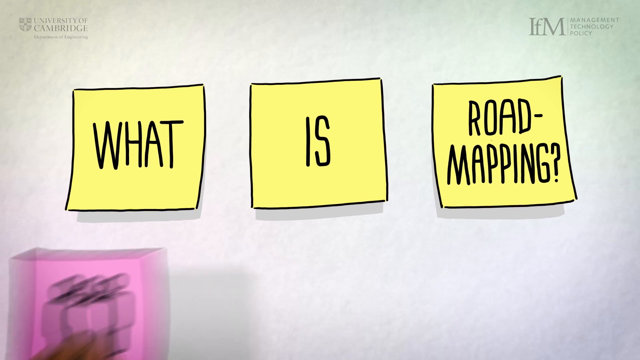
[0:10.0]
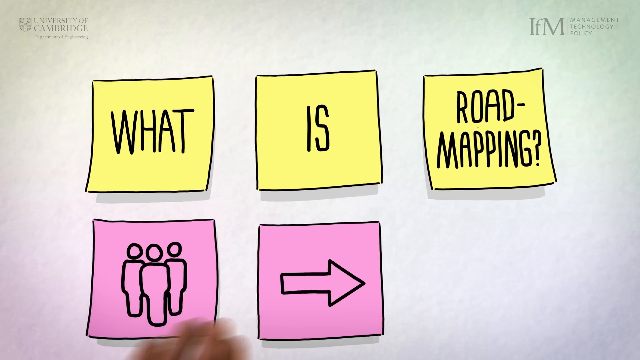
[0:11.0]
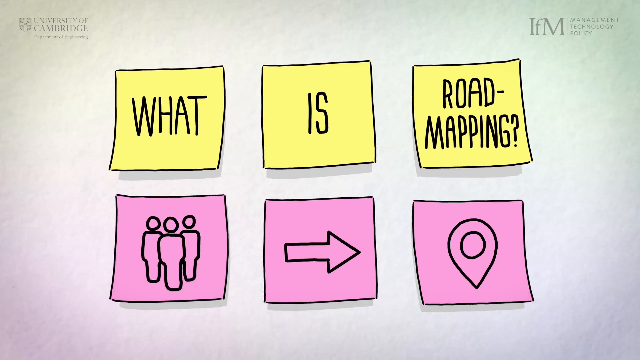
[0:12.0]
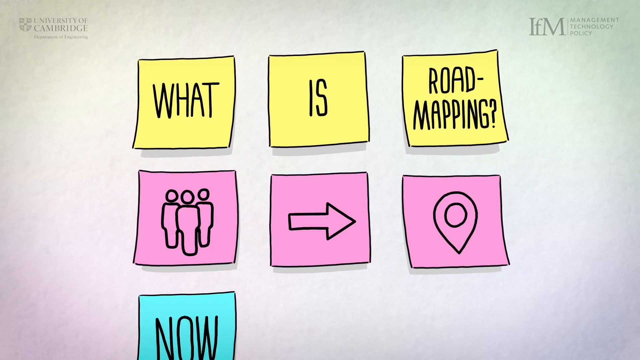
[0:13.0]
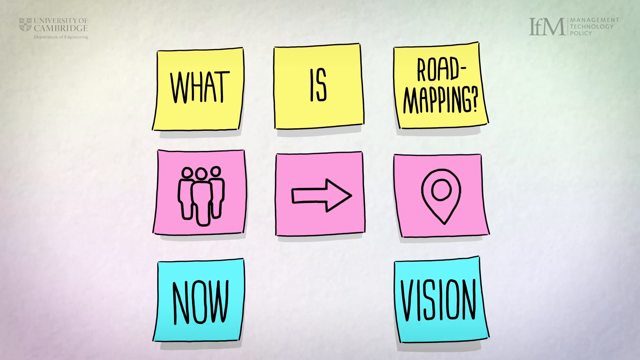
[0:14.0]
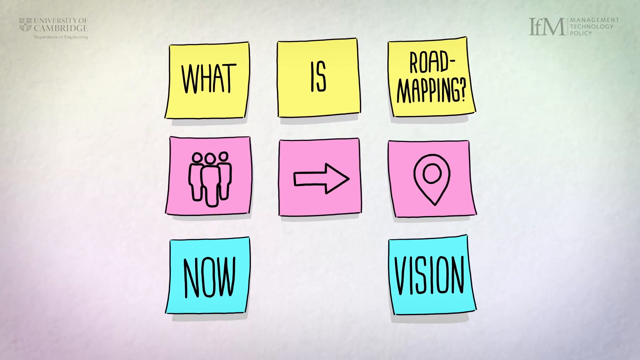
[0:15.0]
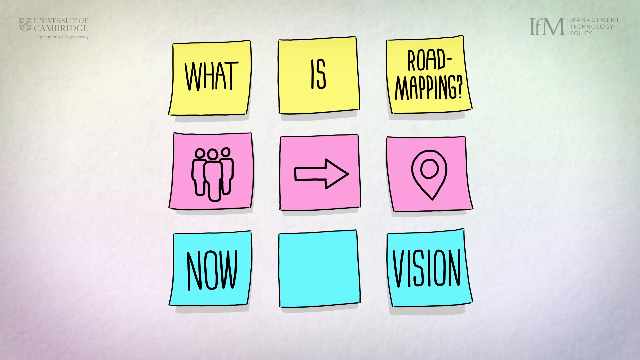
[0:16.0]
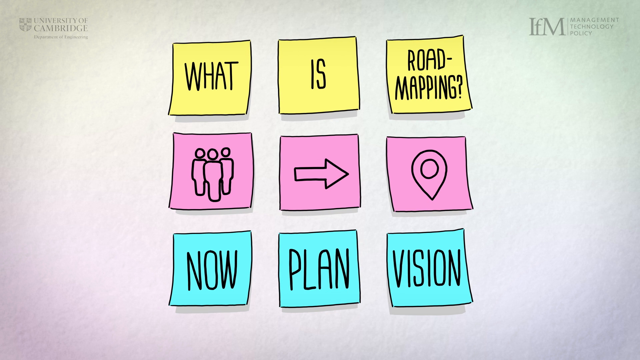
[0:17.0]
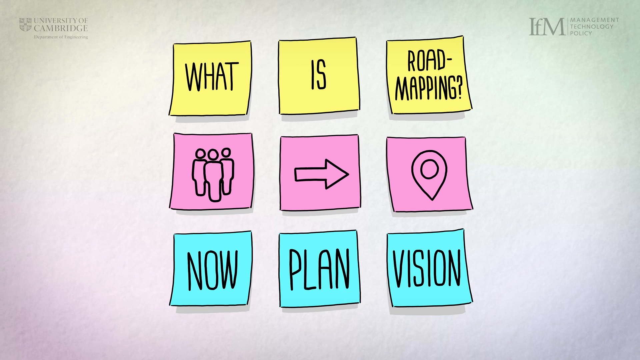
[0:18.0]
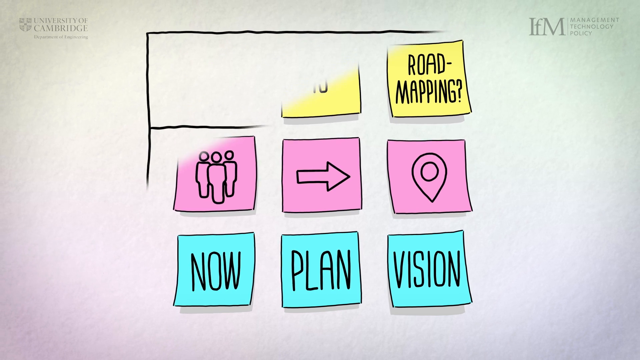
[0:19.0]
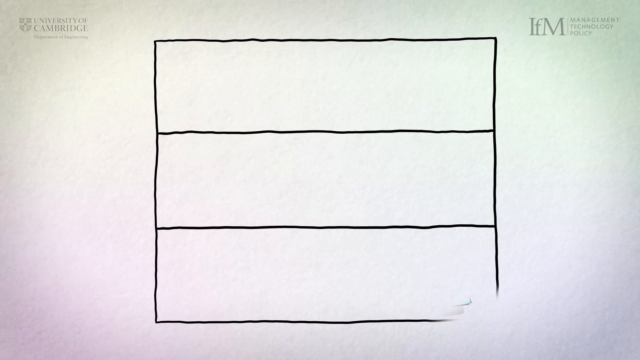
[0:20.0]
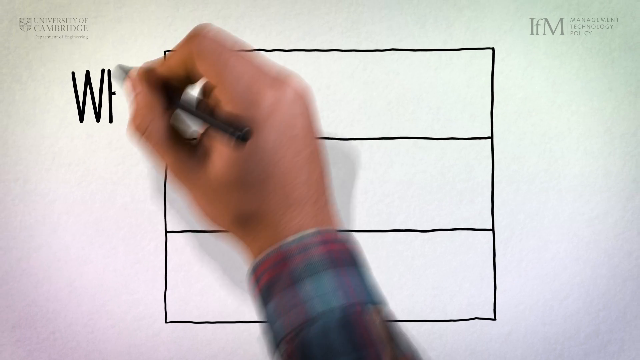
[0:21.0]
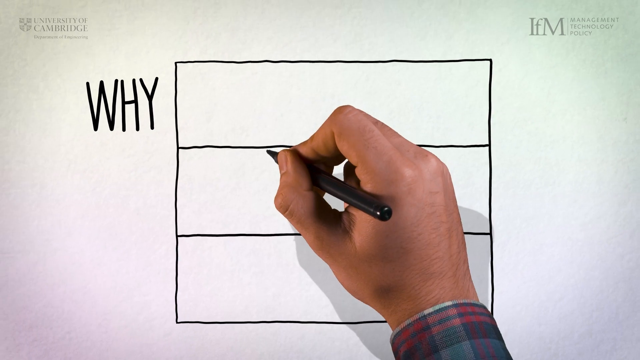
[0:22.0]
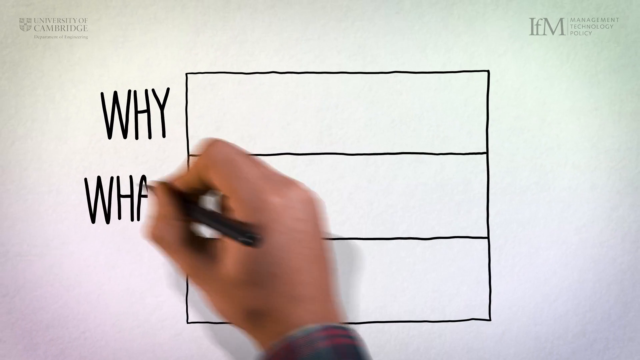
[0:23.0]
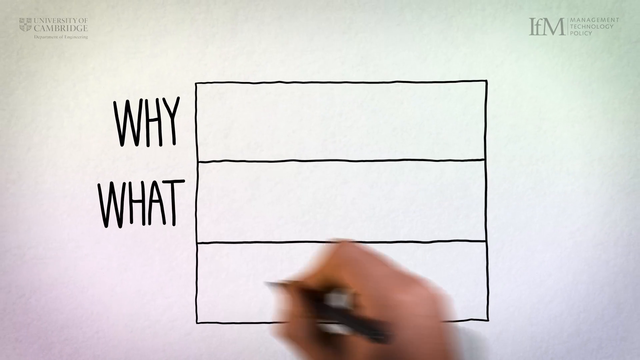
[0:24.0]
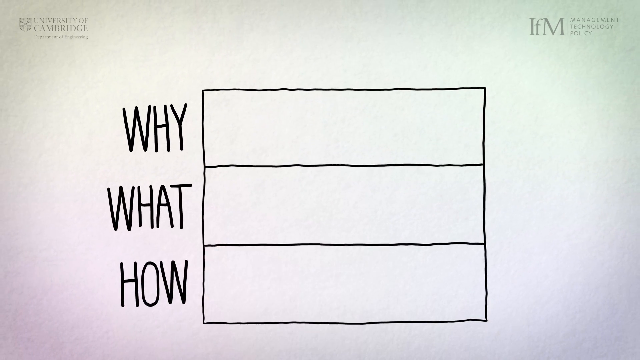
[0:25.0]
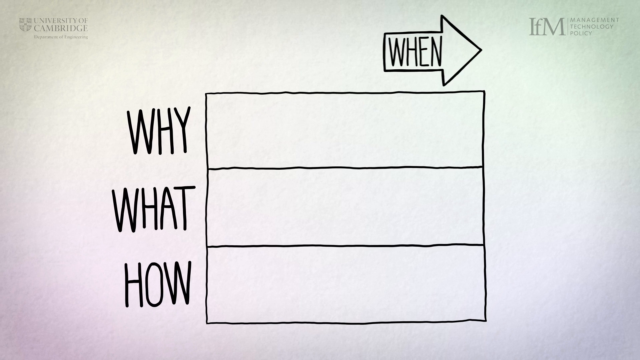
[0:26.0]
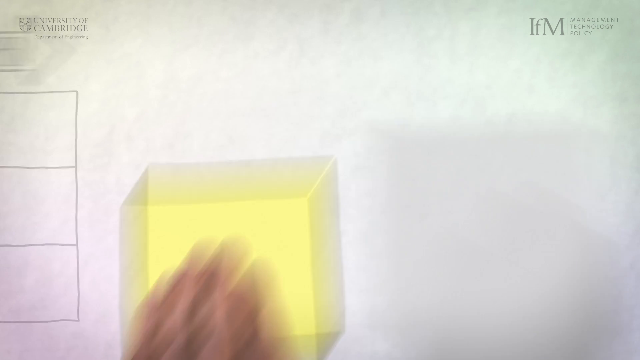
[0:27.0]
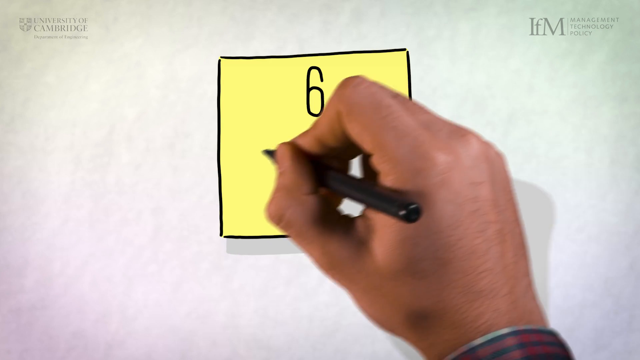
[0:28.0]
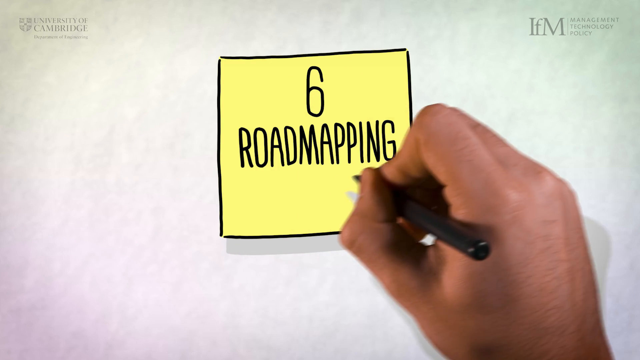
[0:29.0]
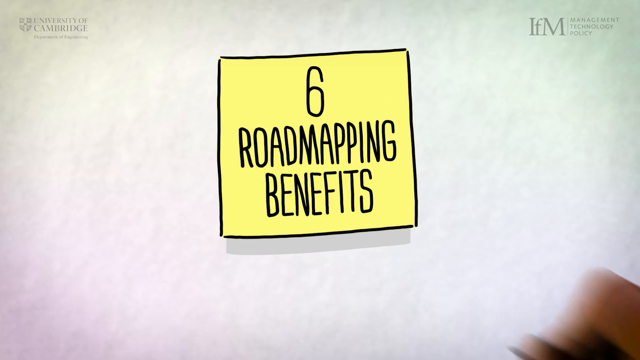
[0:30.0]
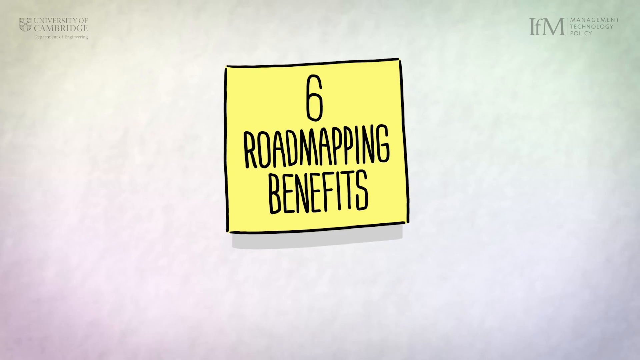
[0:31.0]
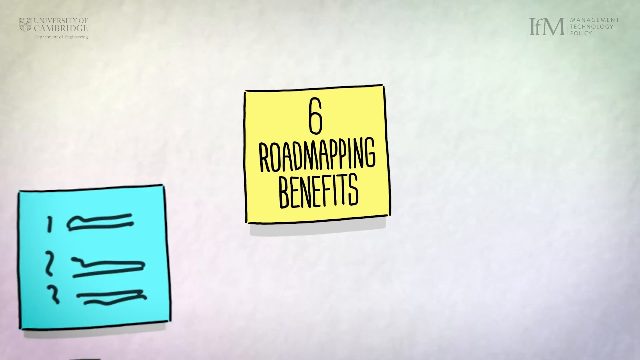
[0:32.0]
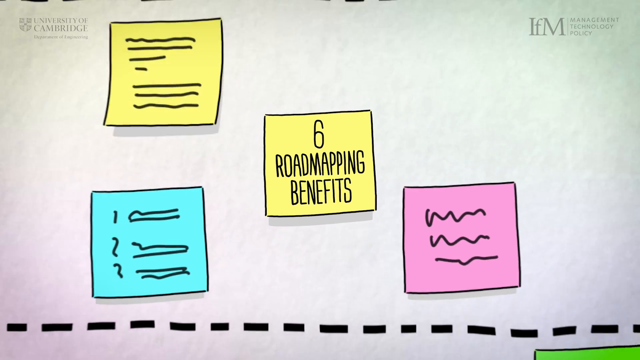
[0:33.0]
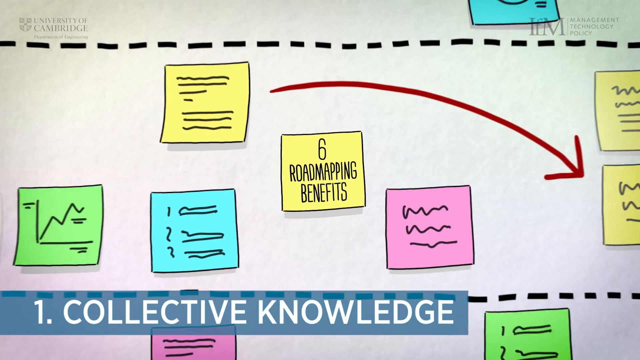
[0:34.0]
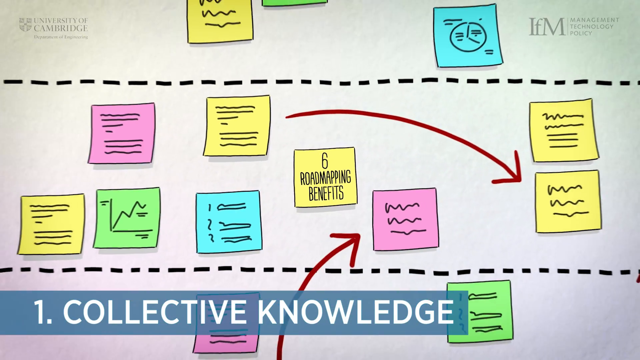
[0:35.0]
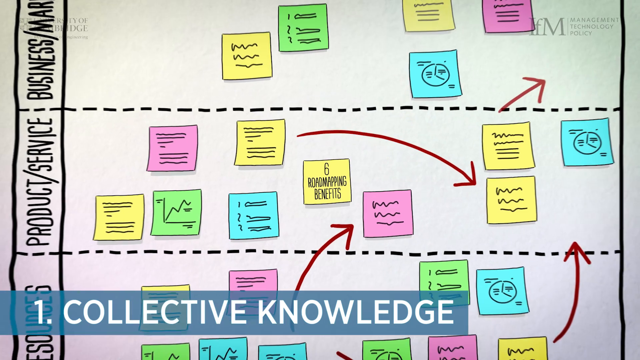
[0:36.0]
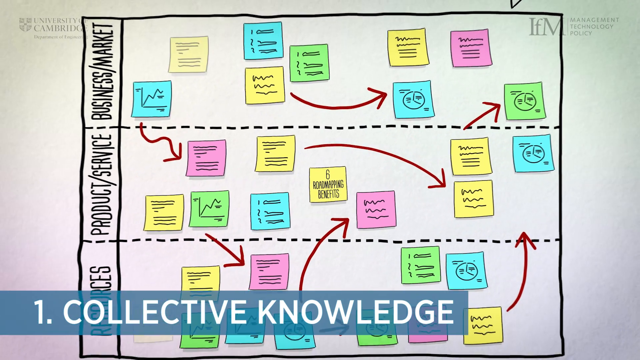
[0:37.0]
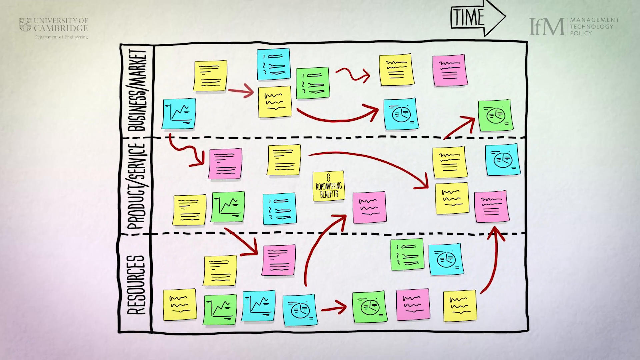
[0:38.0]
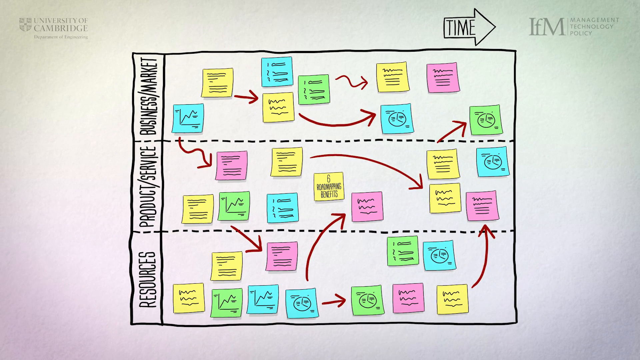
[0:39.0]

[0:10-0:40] The animated drawings of sticky notes remain attached to a white screen, each with one word on it: "what," "is," and "road mapping." Only the hand of the person sticking the notes on the screen is shown. The hand sticks three more notes onto the screen. The first set is yellow and the second set is pink, with one pink note placed under each yellow note. The pink note under "what" has a drawing of three images meant to represent people. The second pink note has a drawing of an arrow. The third pink note, under the third yellow note, has what looks like a symbol for an indication or a target.